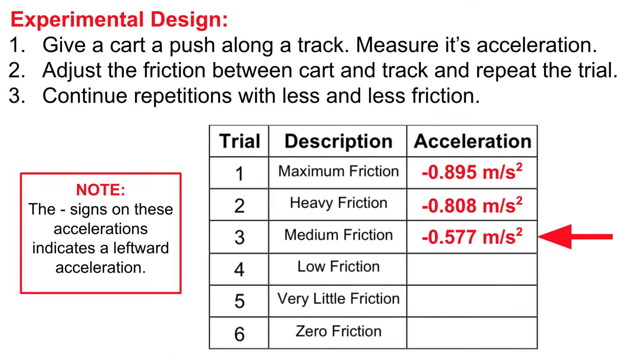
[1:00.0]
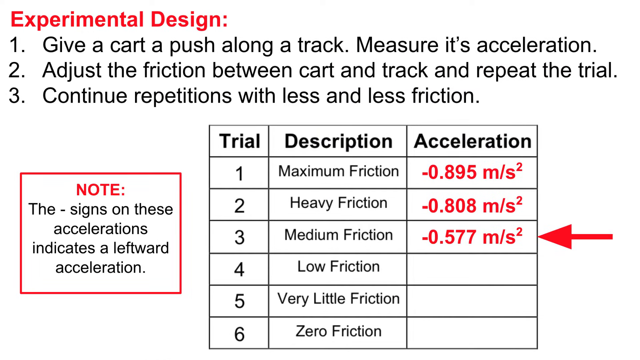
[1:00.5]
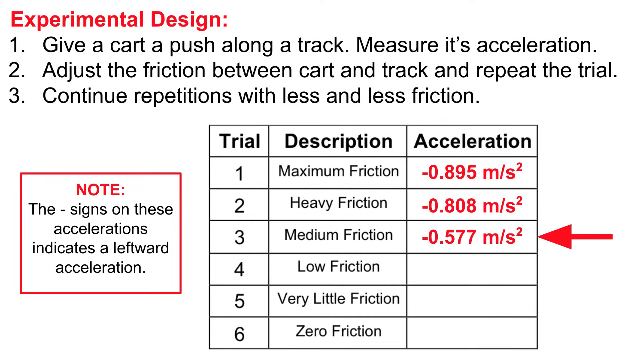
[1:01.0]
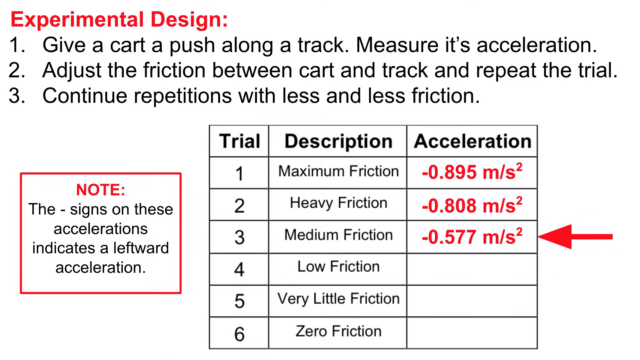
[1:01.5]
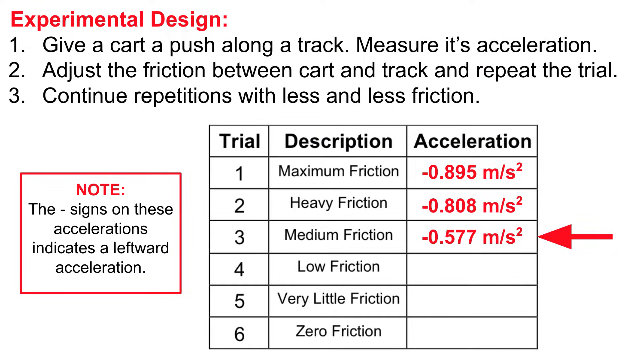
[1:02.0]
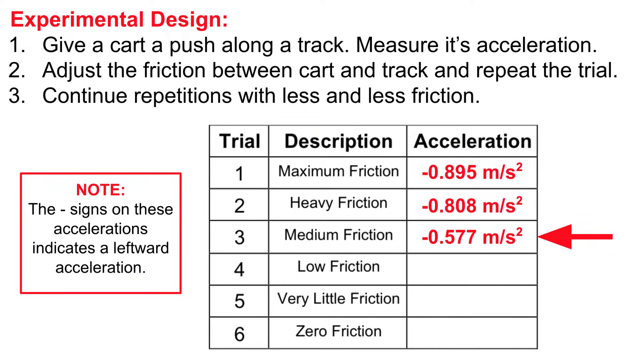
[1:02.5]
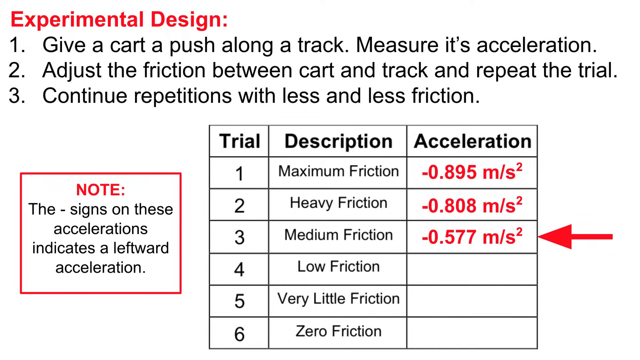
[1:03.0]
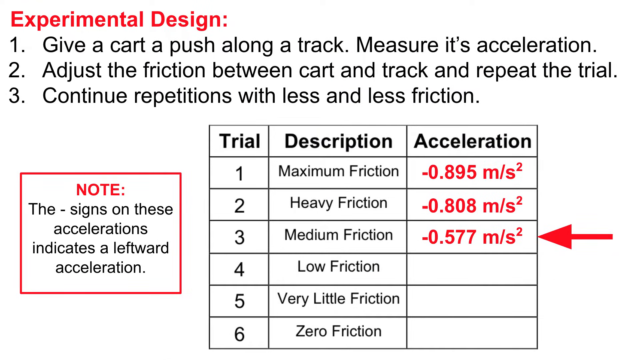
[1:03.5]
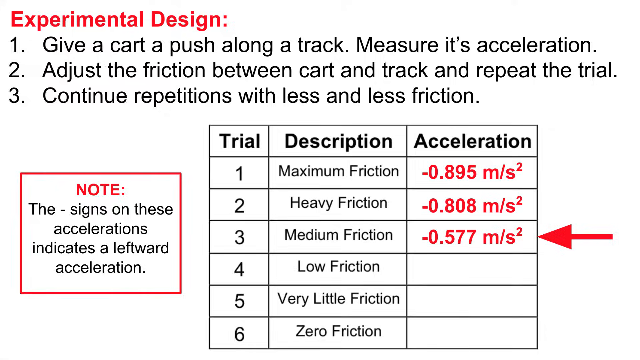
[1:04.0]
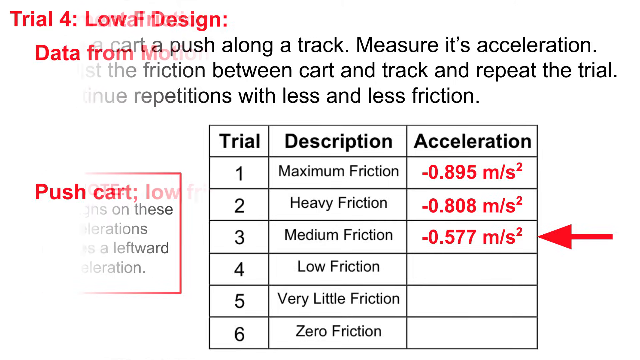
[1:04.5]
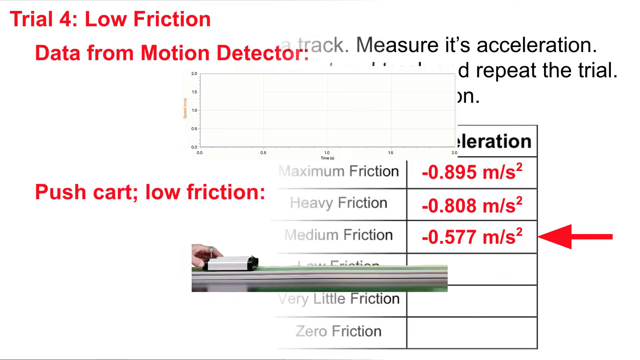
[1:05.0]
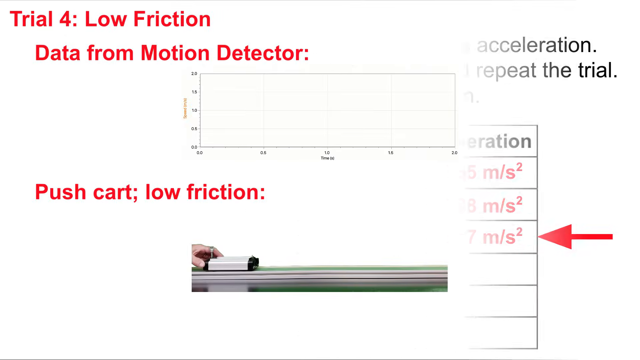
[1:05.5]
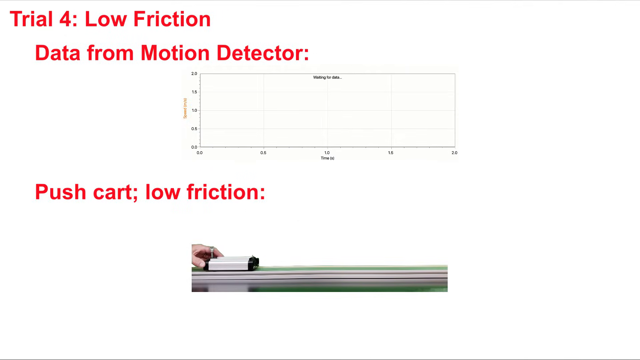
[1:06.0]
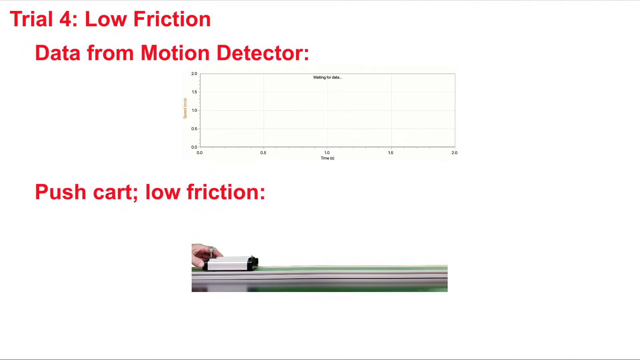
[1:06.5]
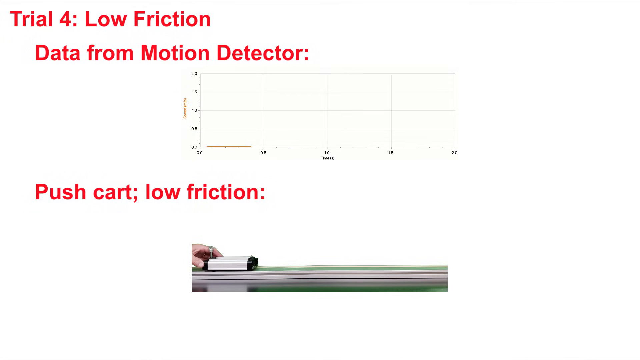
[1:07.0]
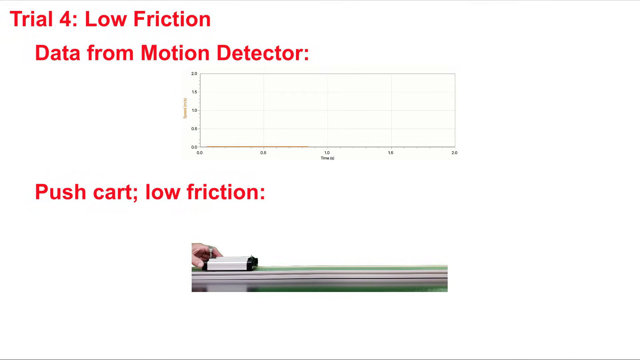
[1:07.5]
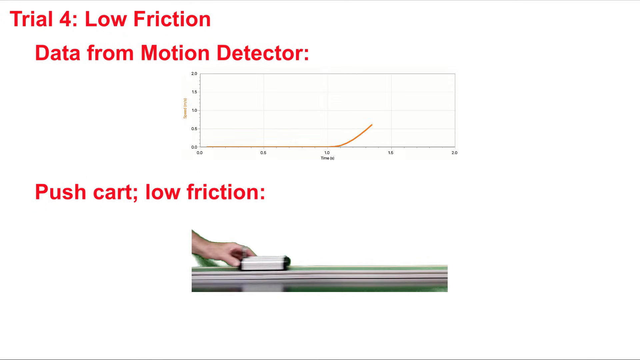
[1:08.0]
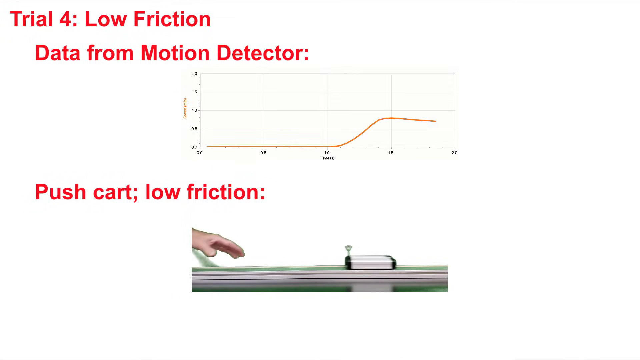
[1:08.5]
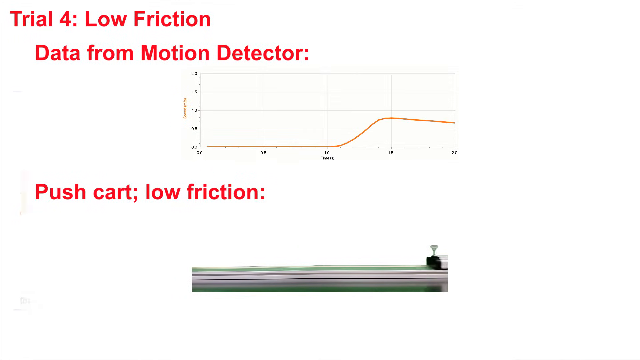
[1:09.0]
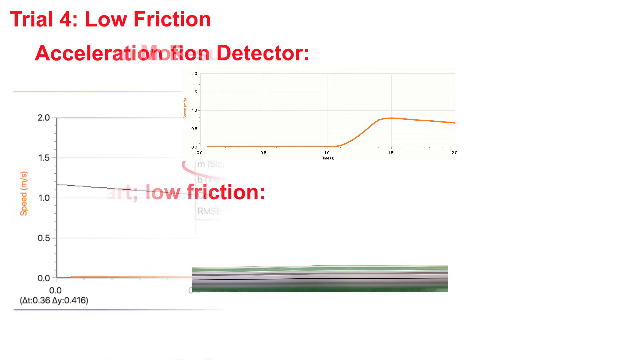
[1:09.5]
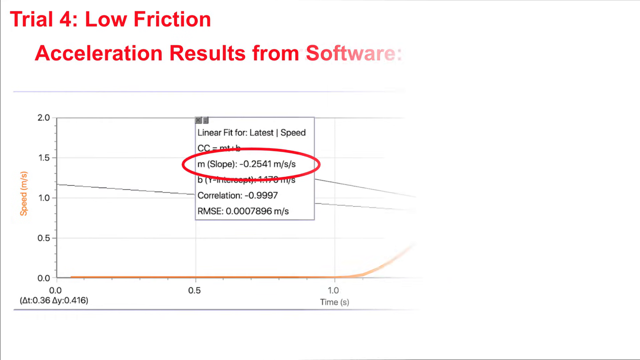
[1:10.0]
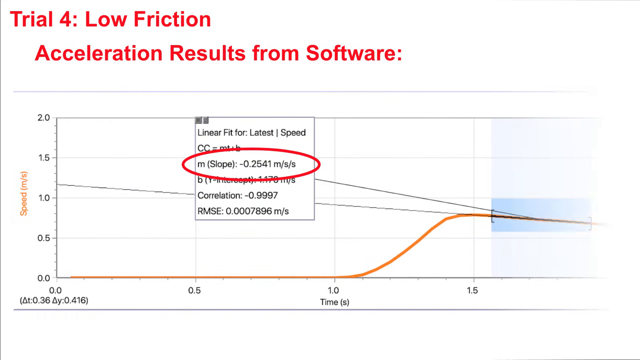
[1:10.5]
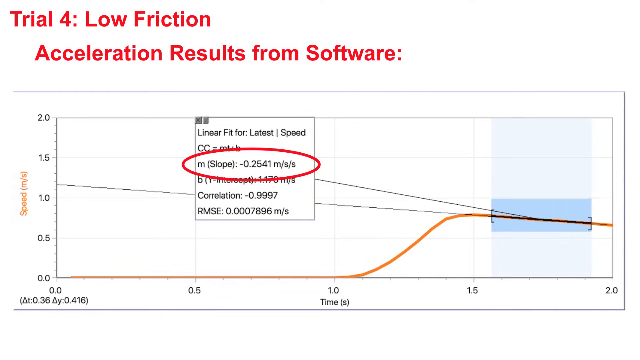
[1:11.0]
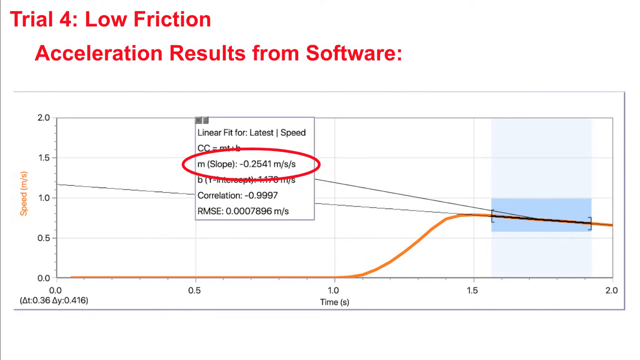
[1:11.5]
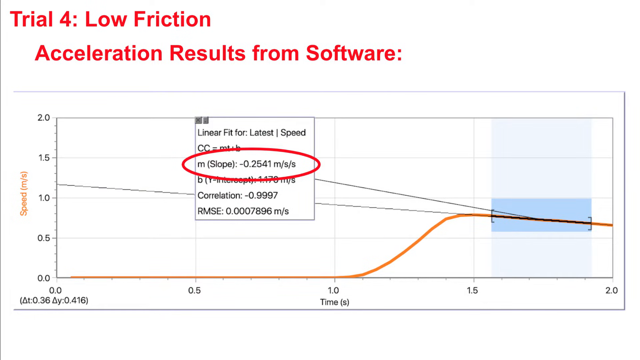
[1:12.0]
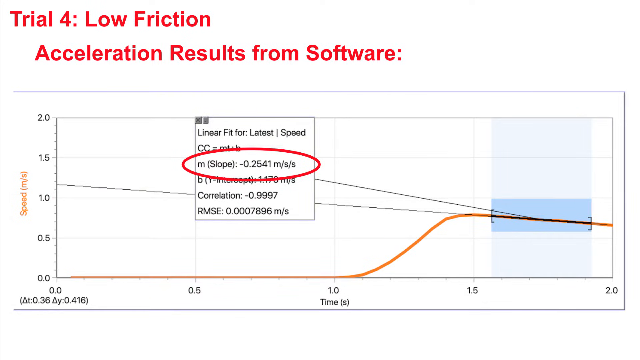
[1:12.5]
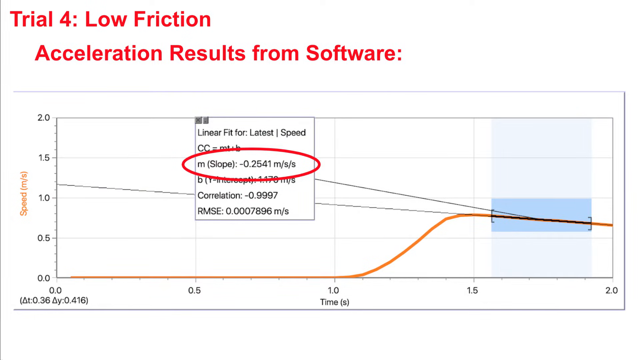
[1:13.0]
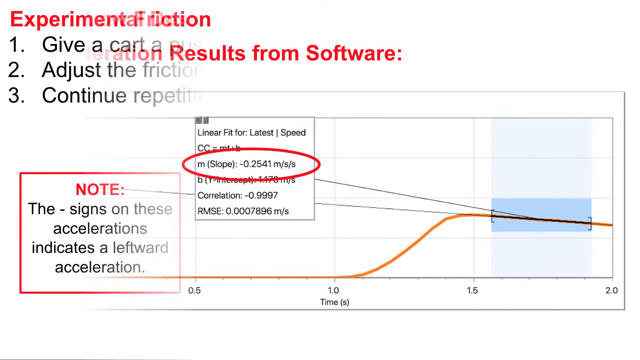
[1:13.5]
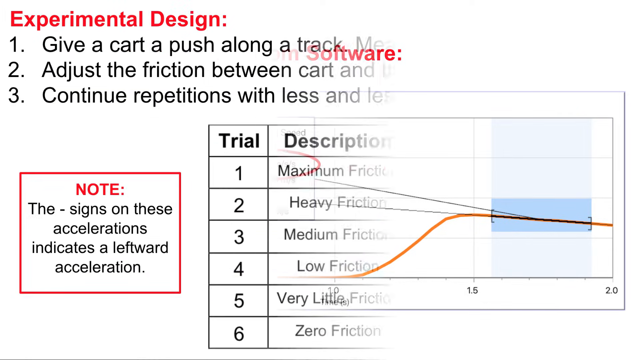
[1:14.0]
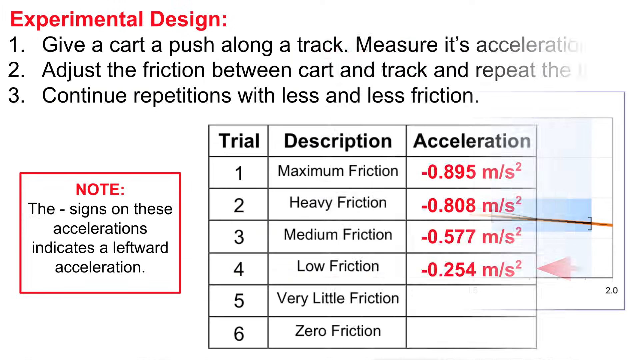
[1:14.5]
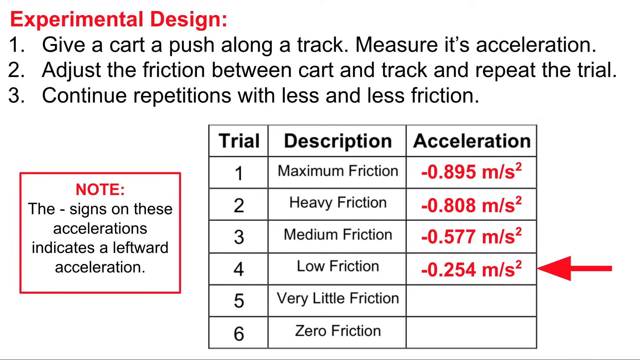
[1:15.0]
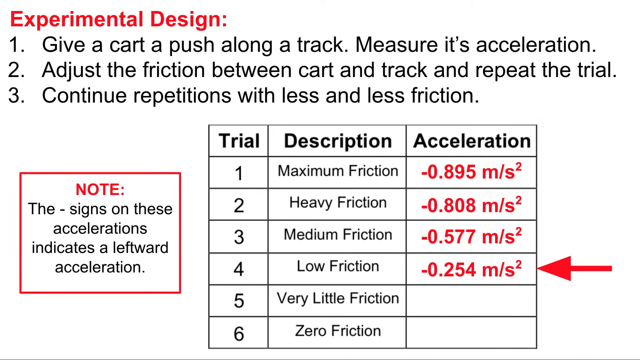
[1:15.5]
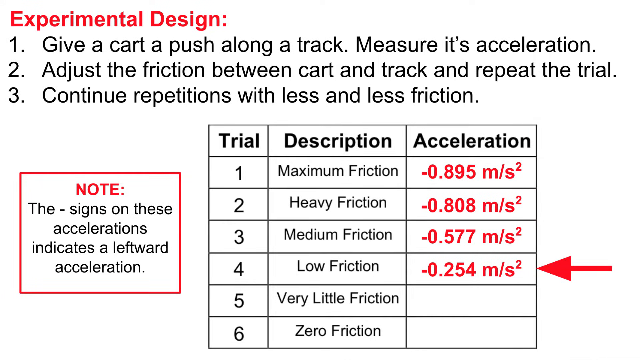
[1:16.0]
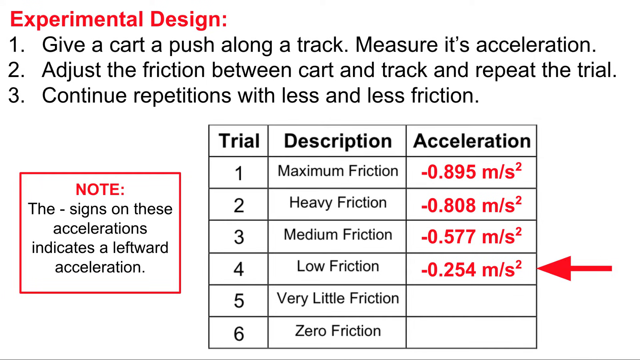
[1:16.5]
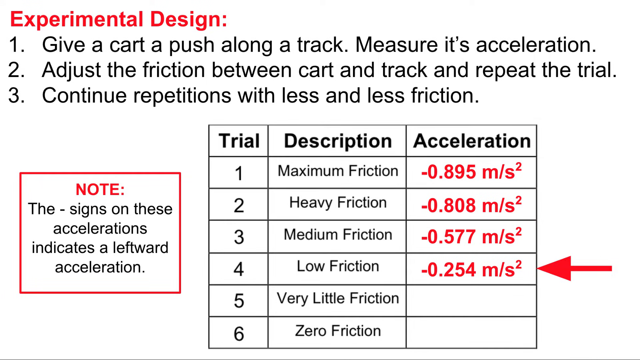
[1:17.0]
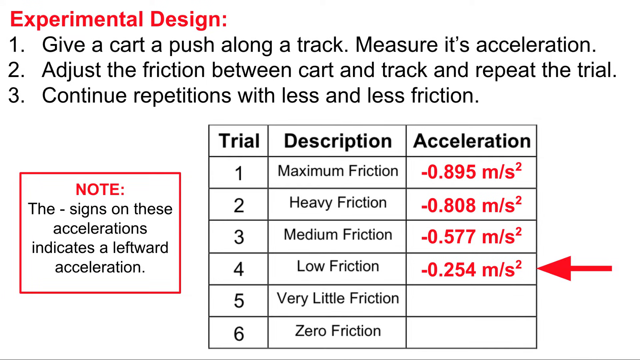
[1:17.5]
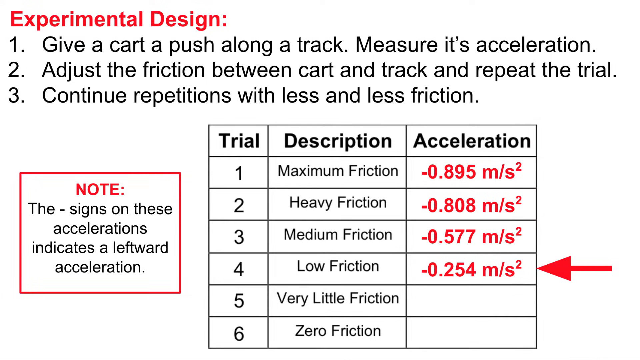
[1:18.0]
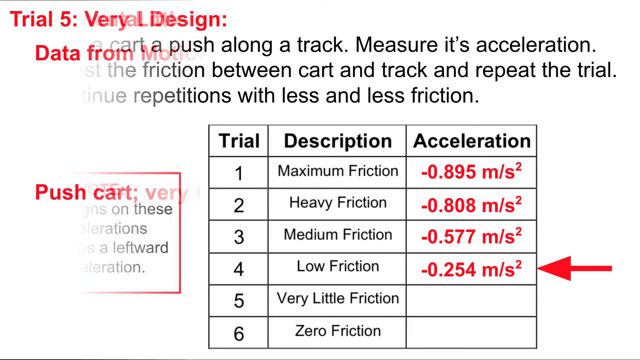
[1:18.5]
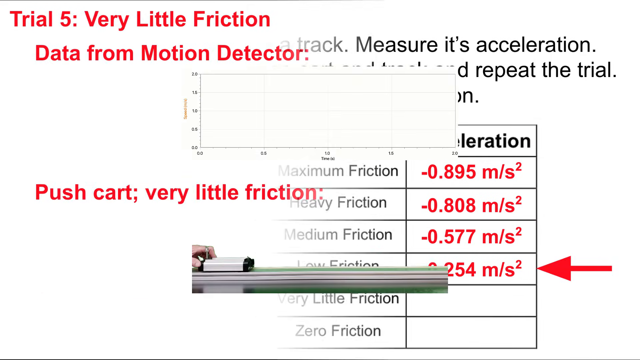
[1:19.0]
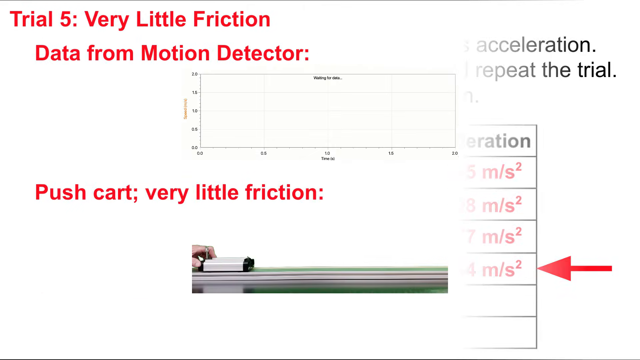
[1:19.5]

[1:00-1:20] The demonstration for trial 4 follows the same process and conditions, with the description low friction. On the left-hand side a note reads "The signs on these accelerations indicate a leftward acceleration." The acceleration obtained for trial 4 is minus 0.254 meters per second squared. A graph shows the process used to reach the result.